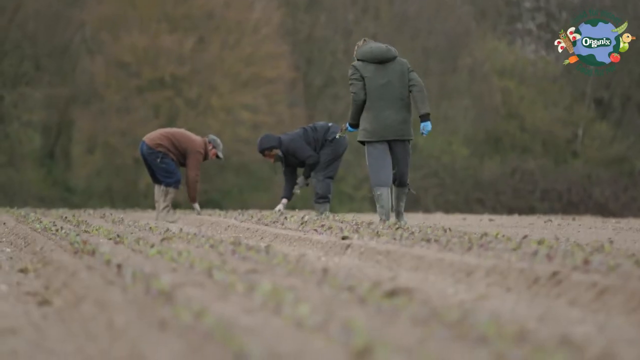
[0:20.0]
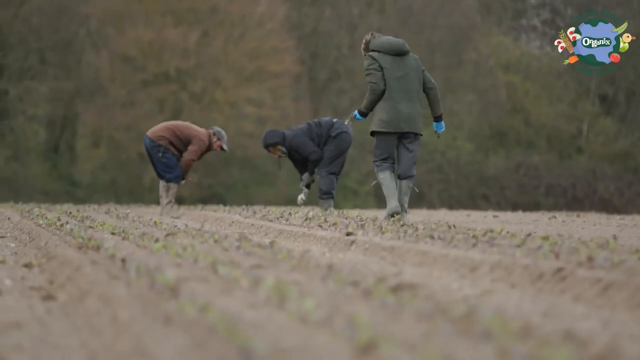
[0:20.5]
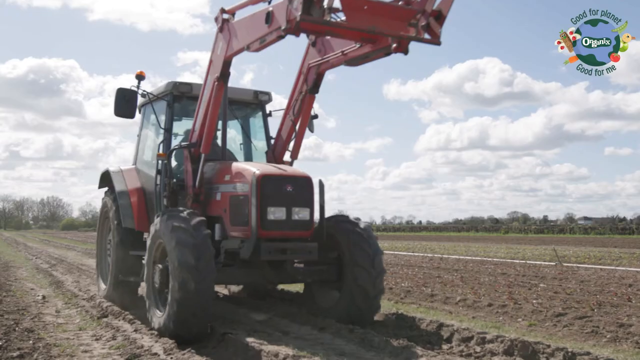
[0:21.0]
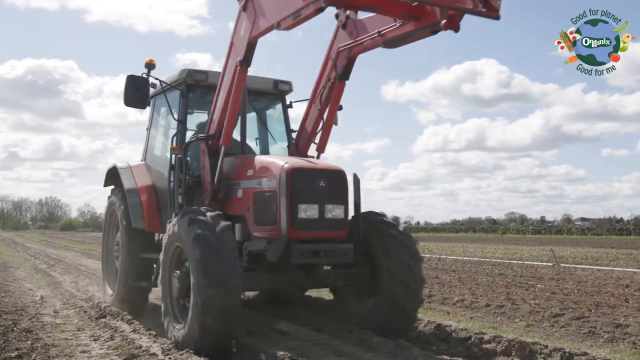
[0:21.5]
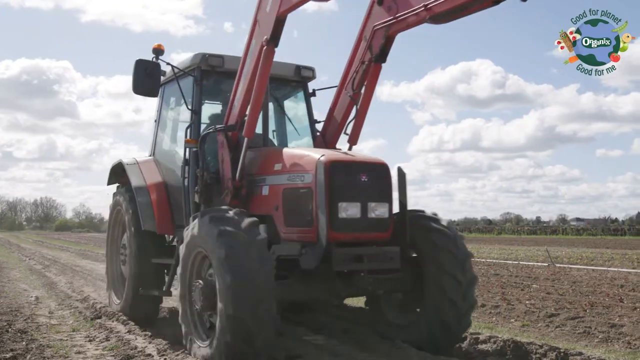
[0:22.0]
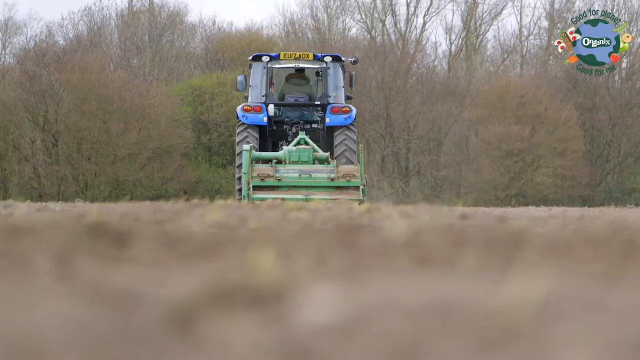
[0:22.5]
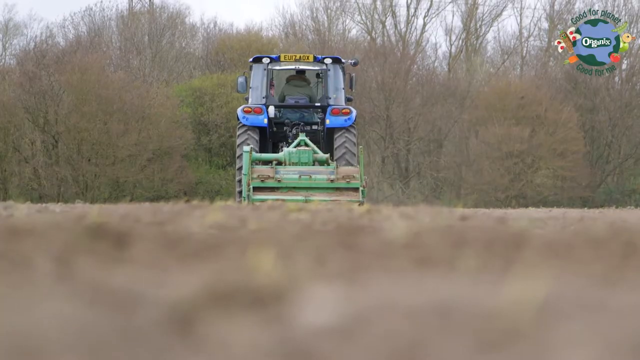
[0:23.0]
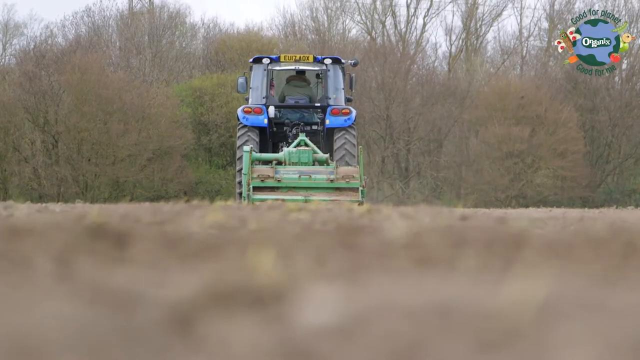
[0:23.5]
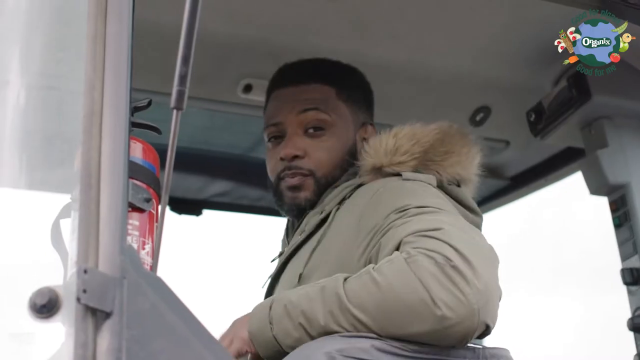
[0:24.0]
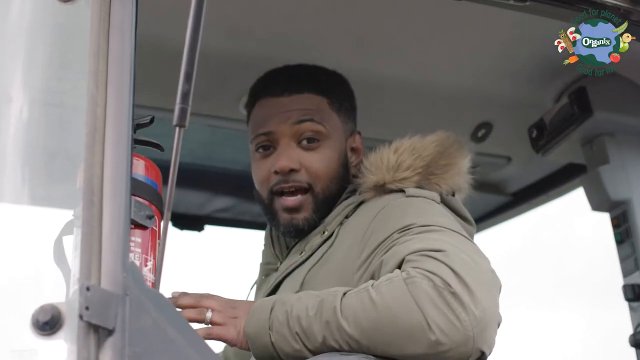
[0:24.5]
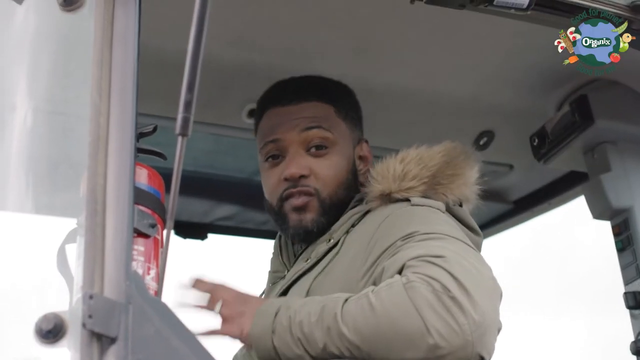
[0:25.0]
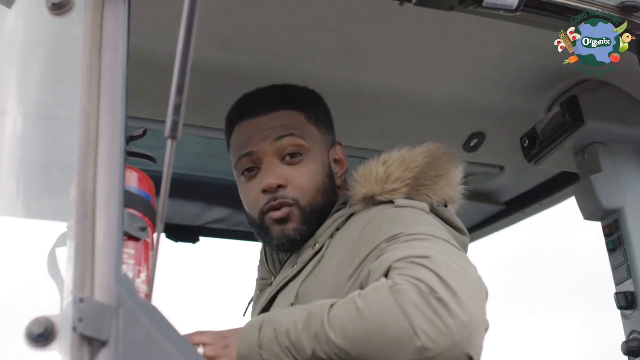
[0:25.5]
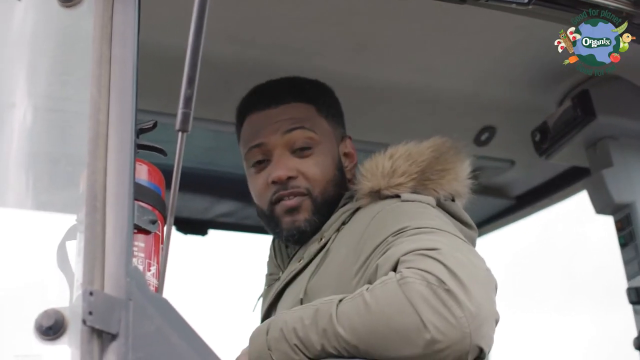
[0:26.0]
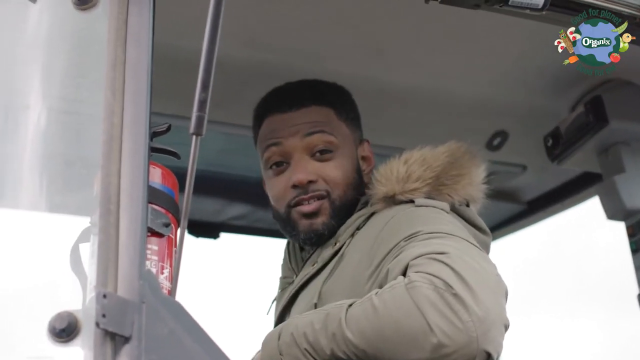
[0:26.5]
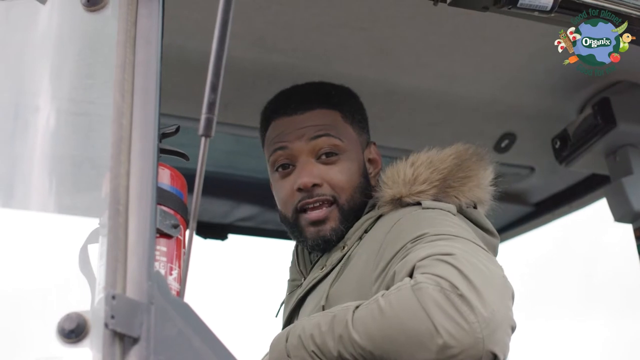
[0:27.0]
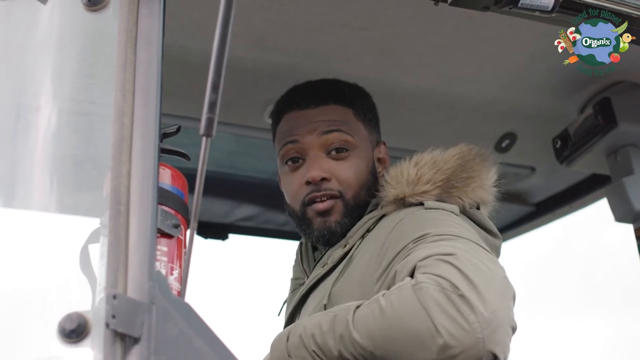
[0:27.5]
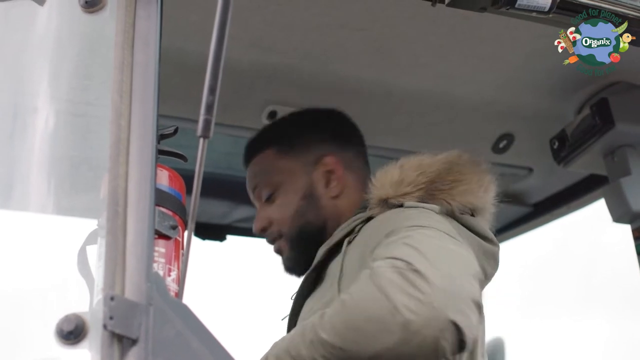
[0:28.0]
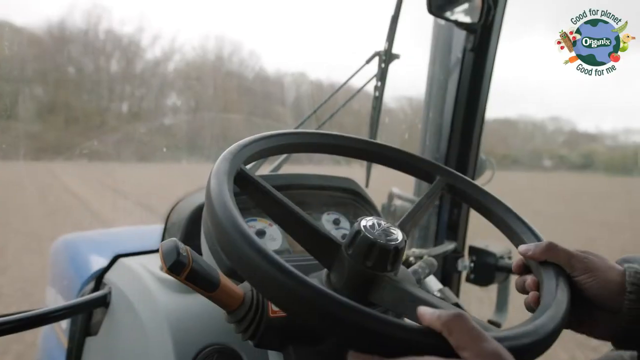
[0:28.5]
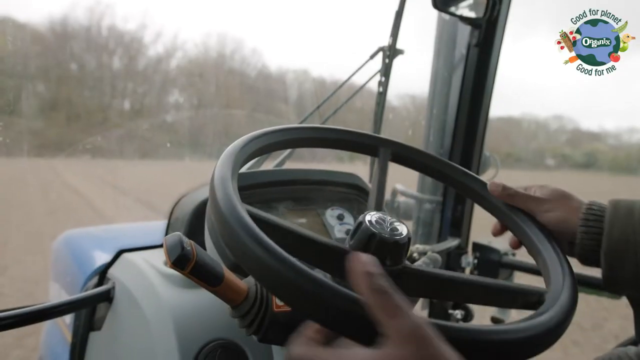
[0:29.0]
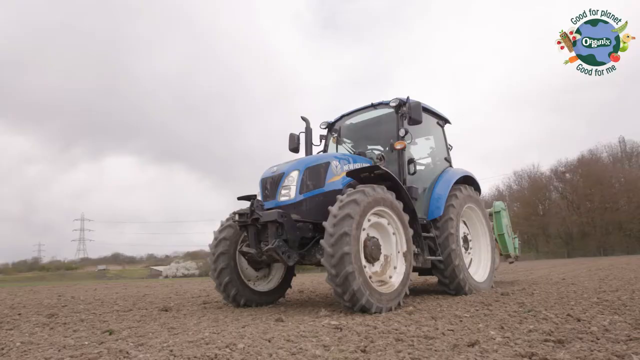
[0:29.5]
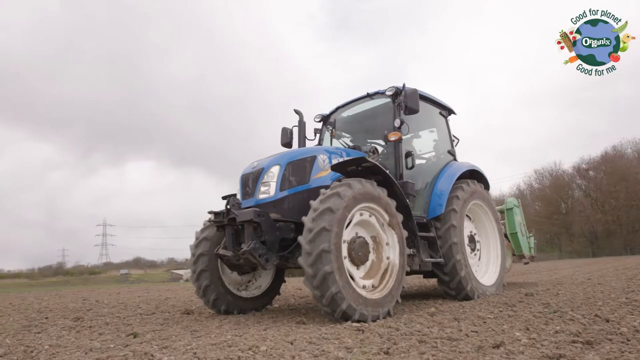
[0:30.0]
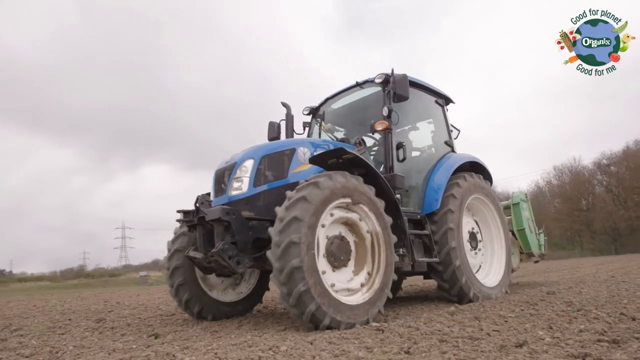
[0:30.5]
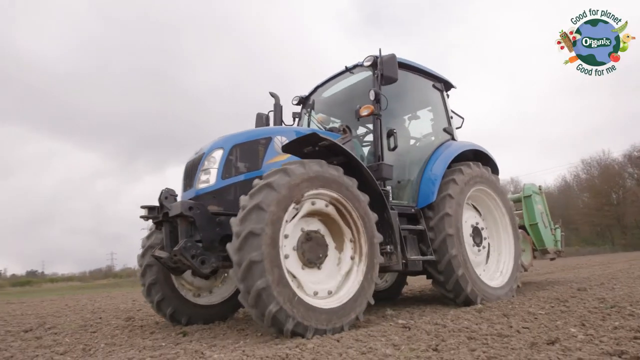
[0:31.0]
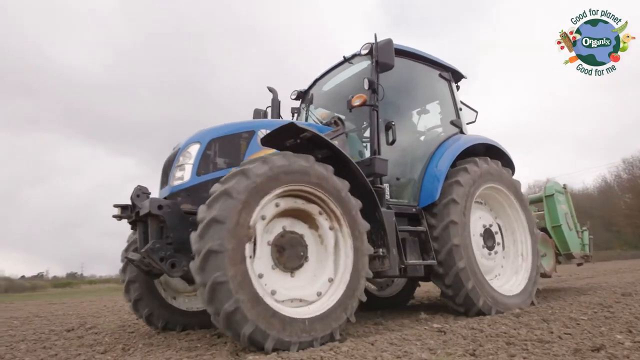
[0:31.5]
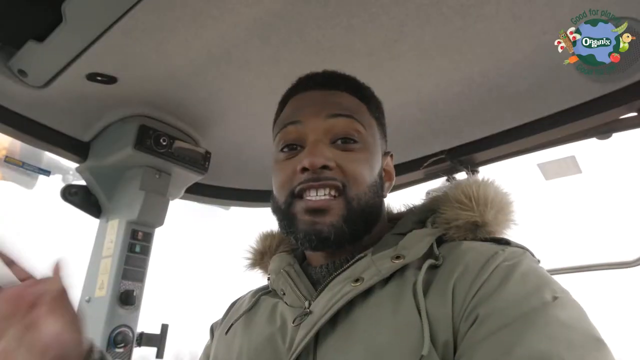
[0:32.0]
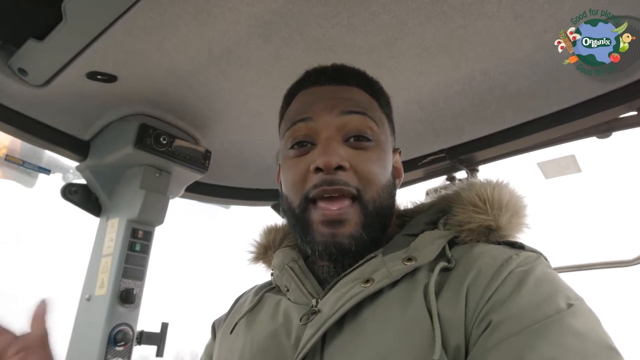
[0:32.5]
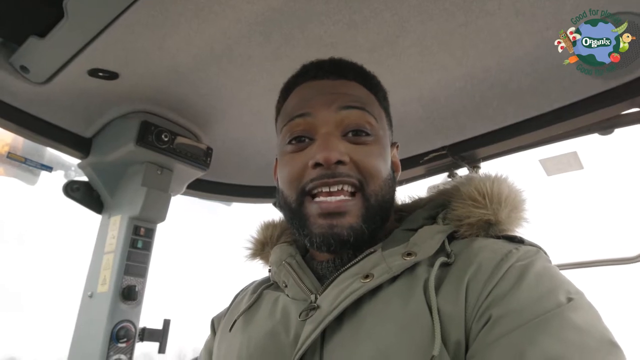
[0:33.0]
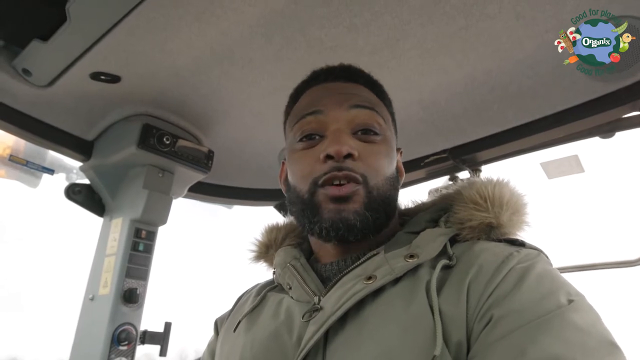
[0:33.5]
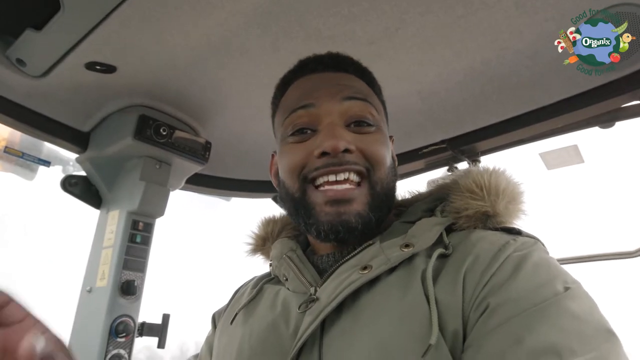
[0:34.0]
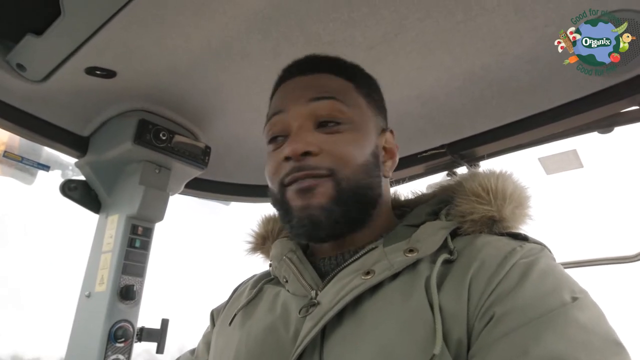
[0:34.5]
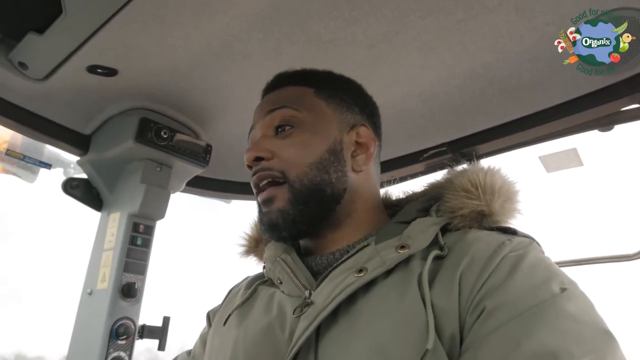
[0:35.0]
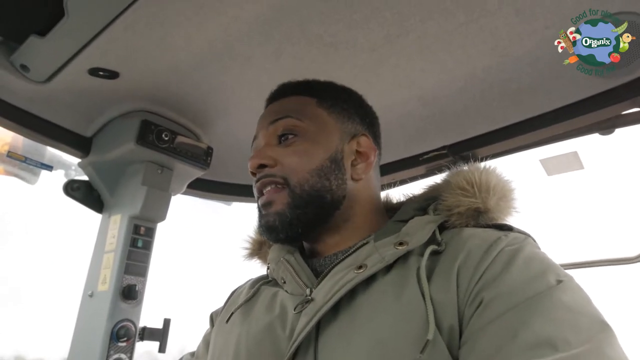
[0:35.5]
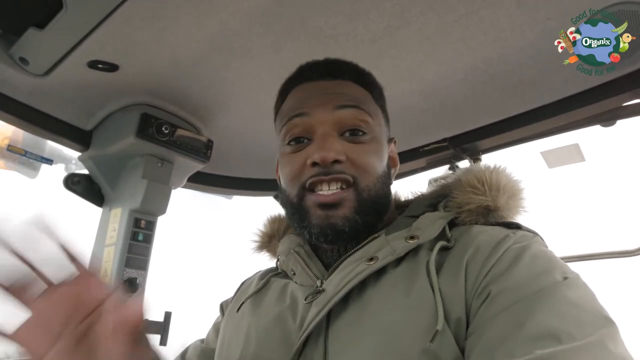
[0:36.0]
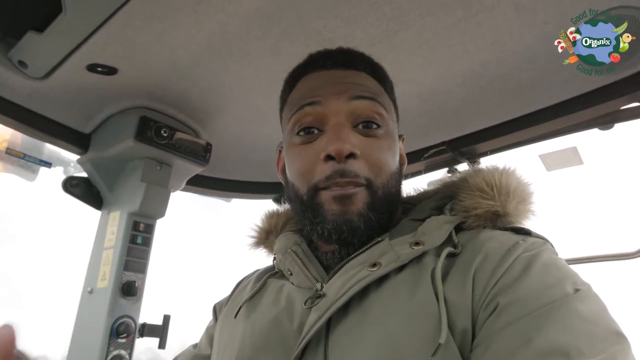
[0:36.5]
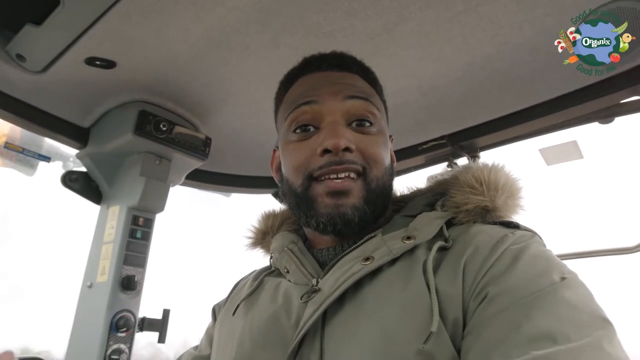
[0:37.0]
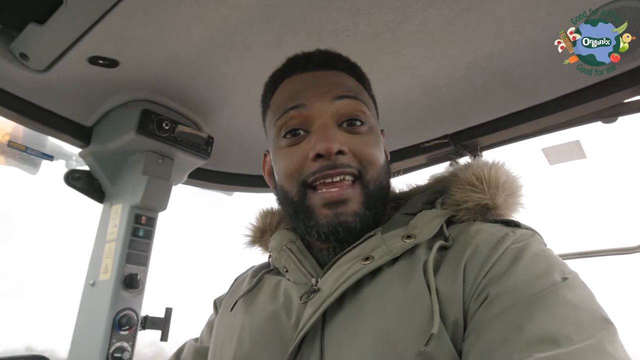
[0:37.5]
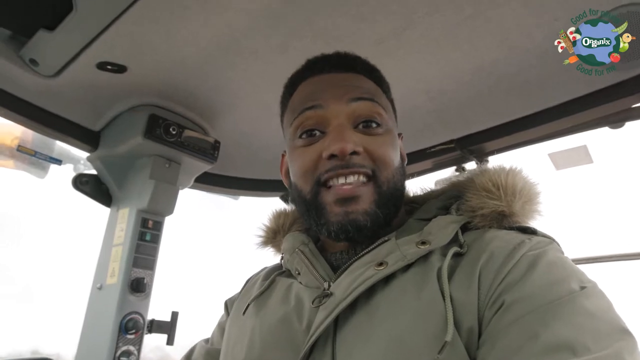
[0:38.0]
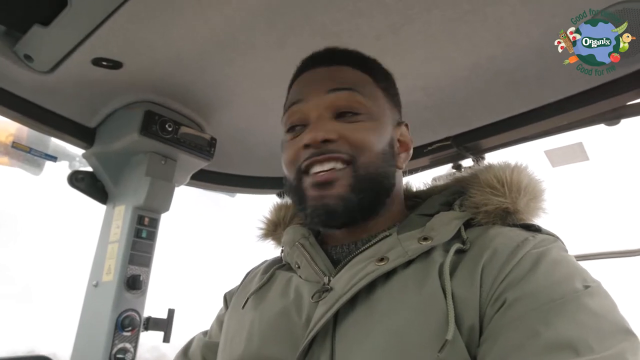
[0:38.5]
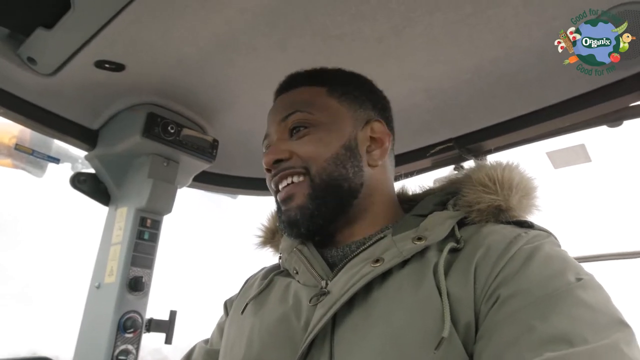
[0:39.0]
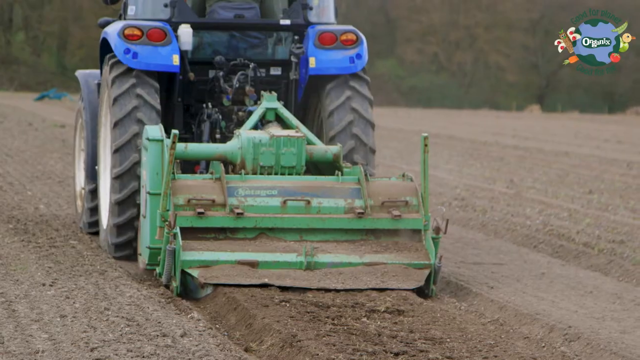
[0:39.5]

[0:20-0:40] A colourful background with a lot of fruit appears, with a banner that says "good for the planet". There is a picture of the earth with the word "organic" written in the middle and fruit decorating around it, plus a caption that reads "on the farm with JB", on another very colourful setting. A man, presumably JB, talks directly to the camera in a very positive mood and shows a small plant and some lettuce. A few seconds show him riding in a tractor on the farm while speaking directly to the camera, apparently showing how they farm. A short shot shows two other men working on the farm. No animals are seen.